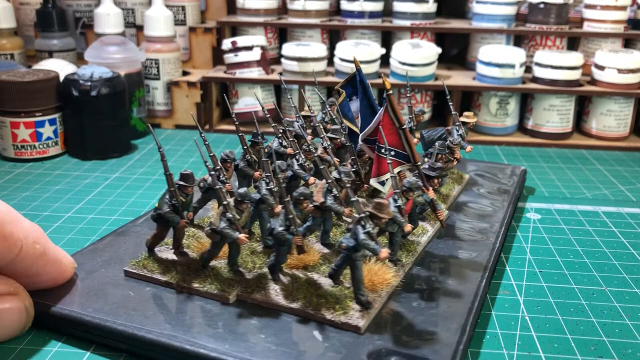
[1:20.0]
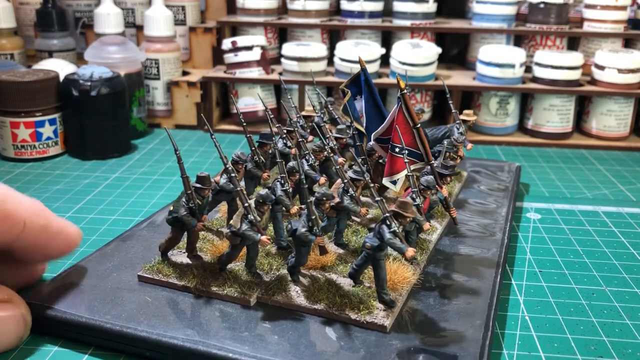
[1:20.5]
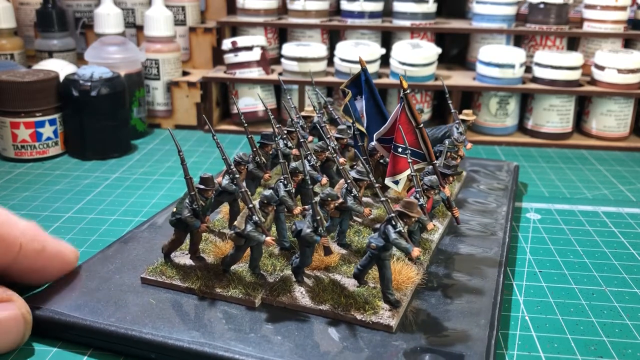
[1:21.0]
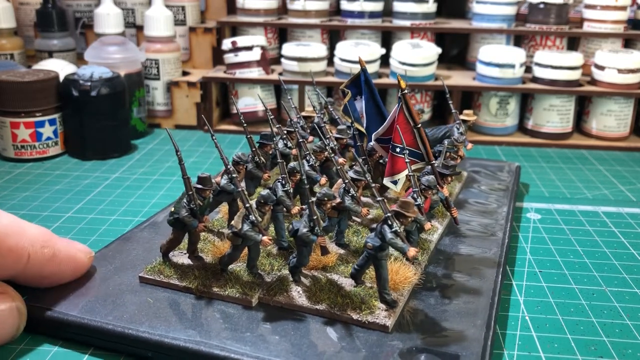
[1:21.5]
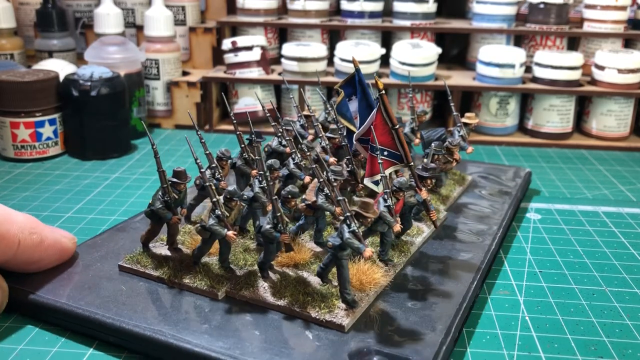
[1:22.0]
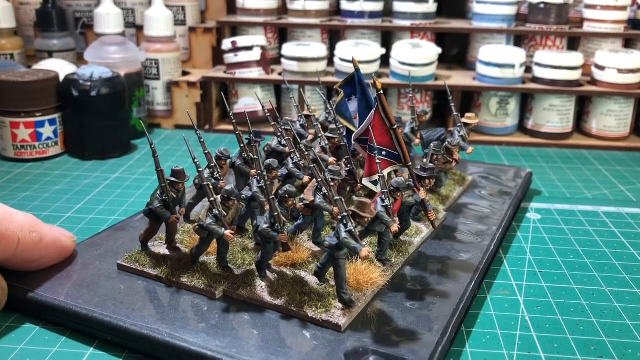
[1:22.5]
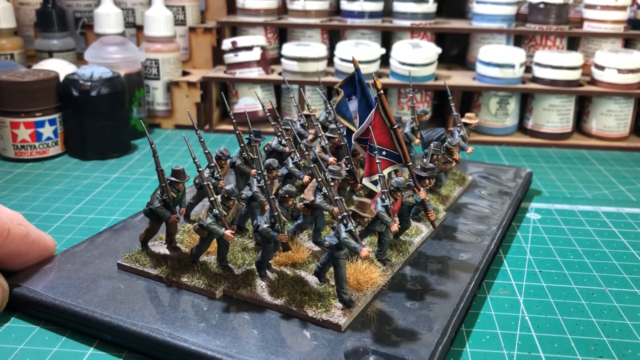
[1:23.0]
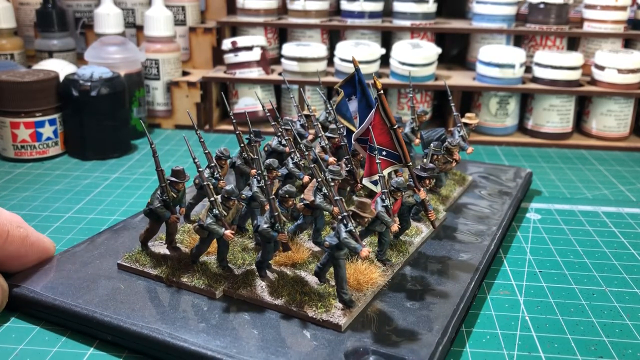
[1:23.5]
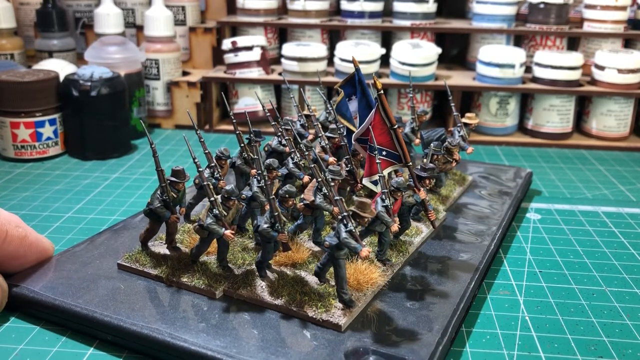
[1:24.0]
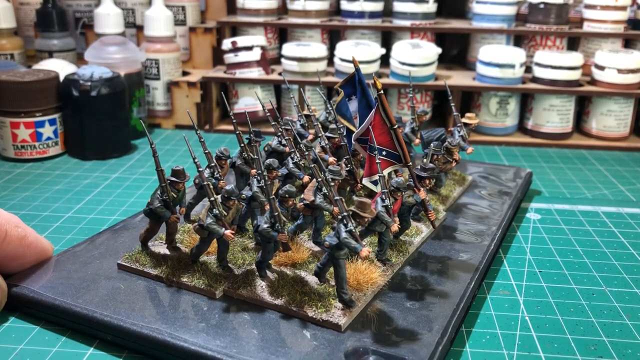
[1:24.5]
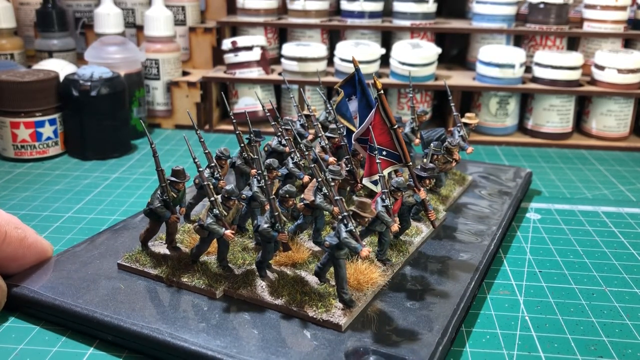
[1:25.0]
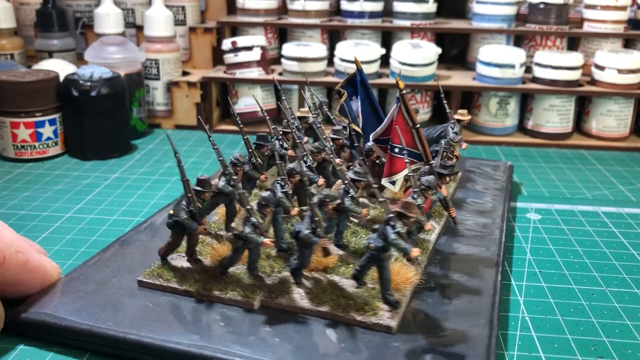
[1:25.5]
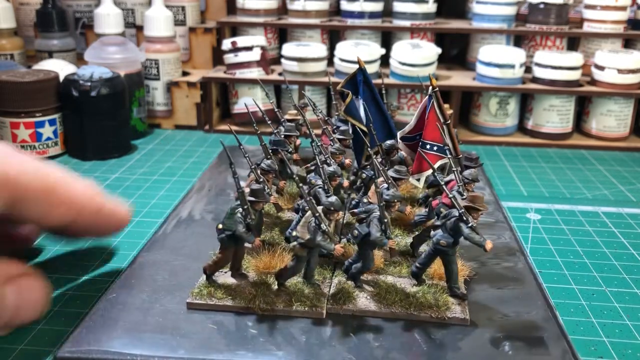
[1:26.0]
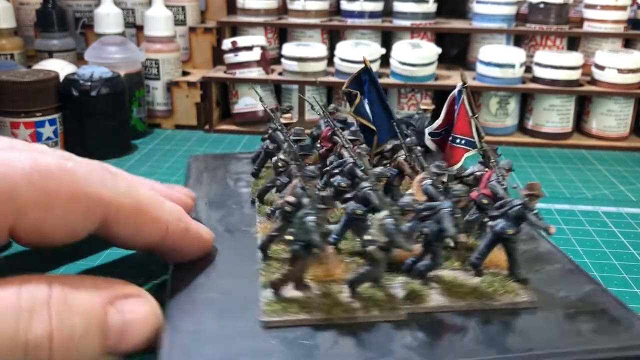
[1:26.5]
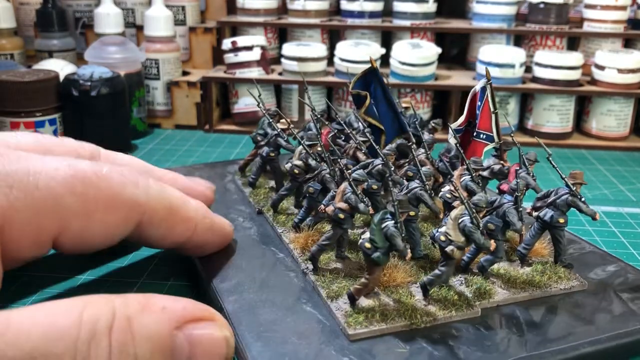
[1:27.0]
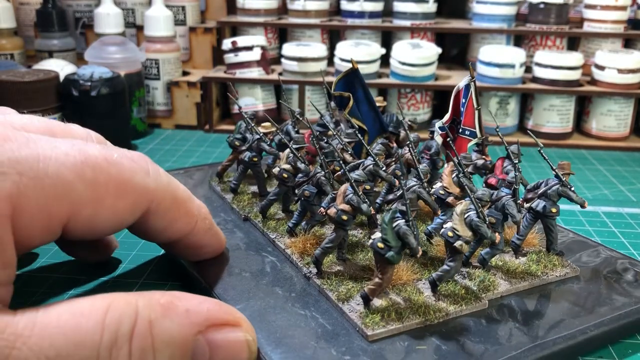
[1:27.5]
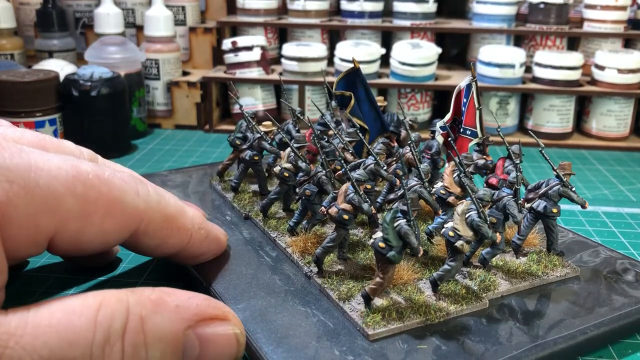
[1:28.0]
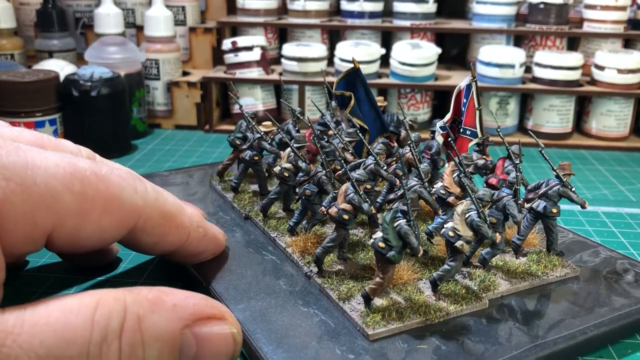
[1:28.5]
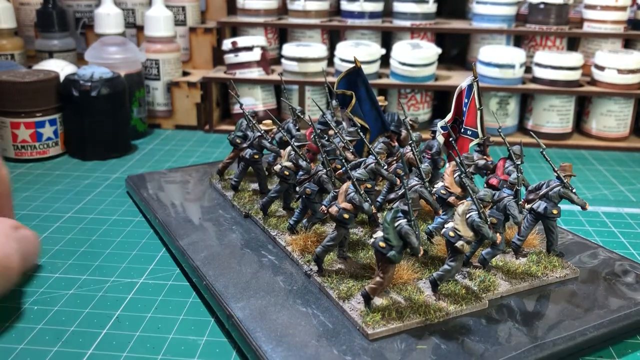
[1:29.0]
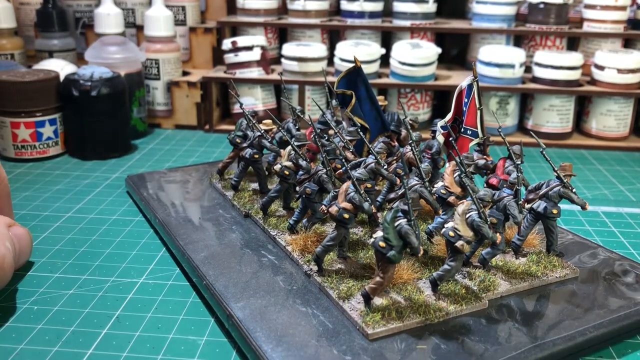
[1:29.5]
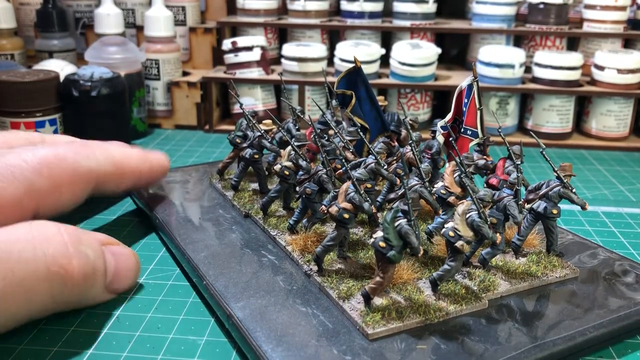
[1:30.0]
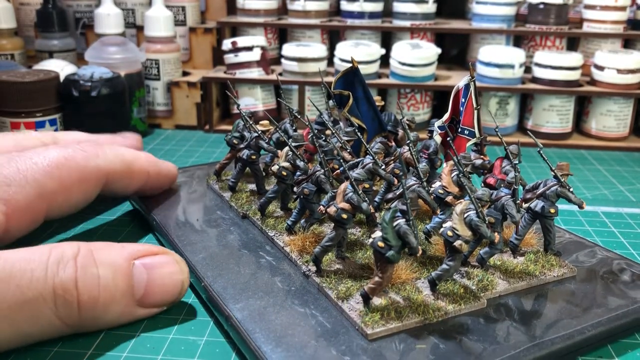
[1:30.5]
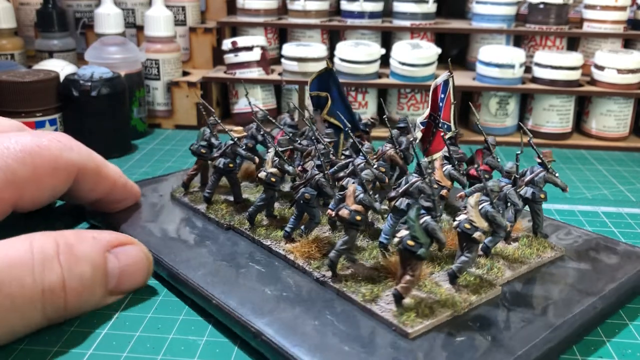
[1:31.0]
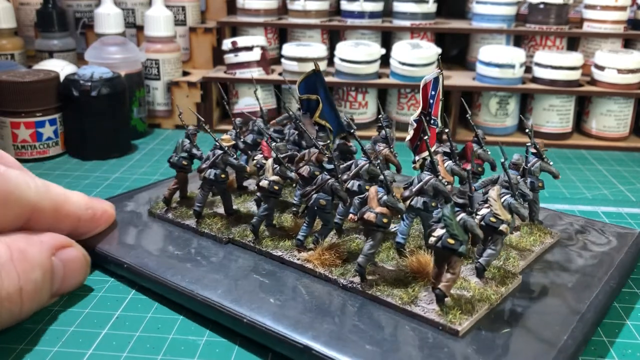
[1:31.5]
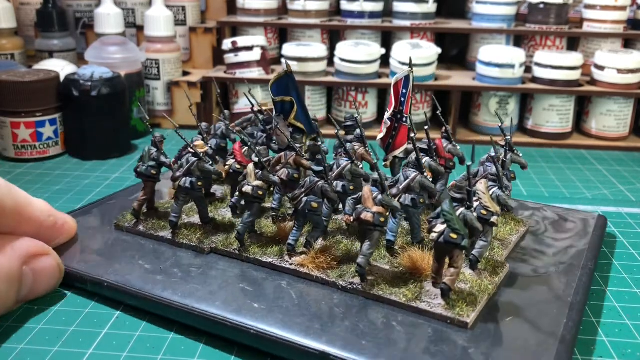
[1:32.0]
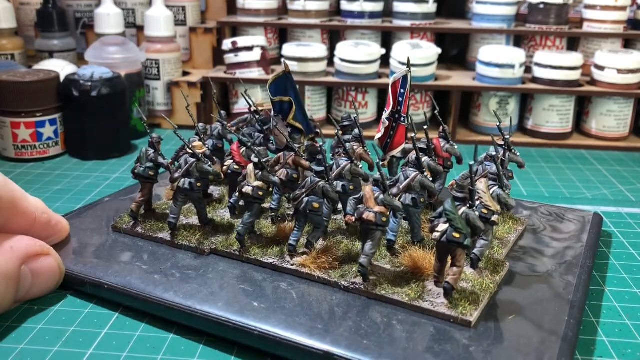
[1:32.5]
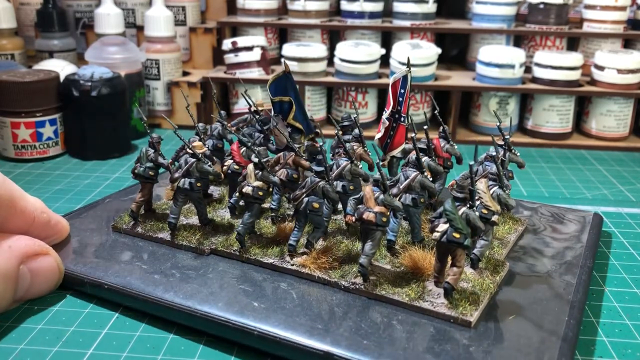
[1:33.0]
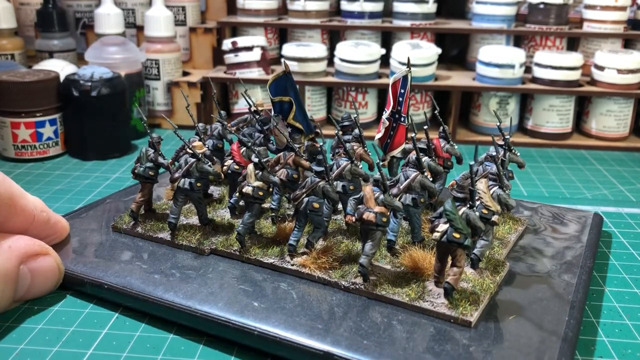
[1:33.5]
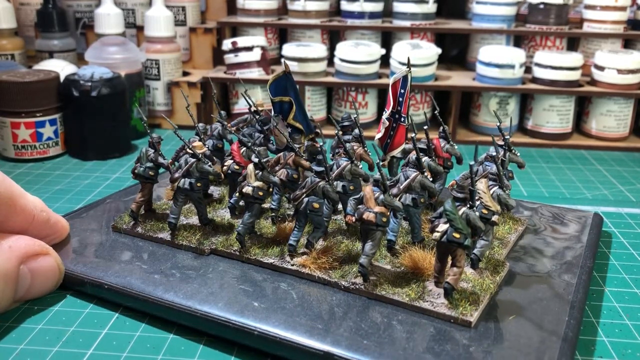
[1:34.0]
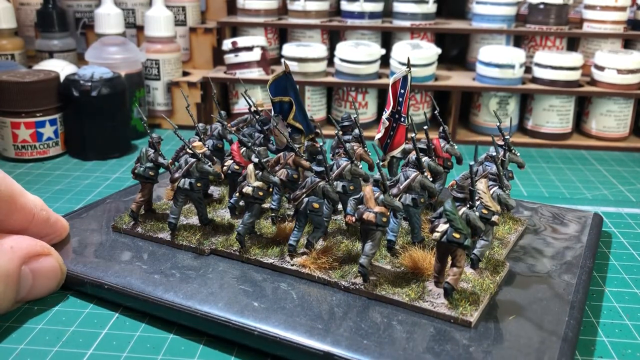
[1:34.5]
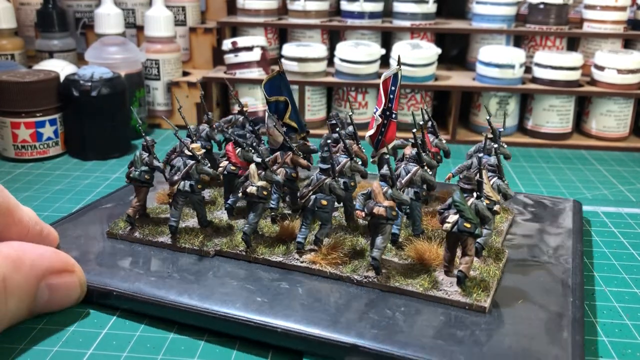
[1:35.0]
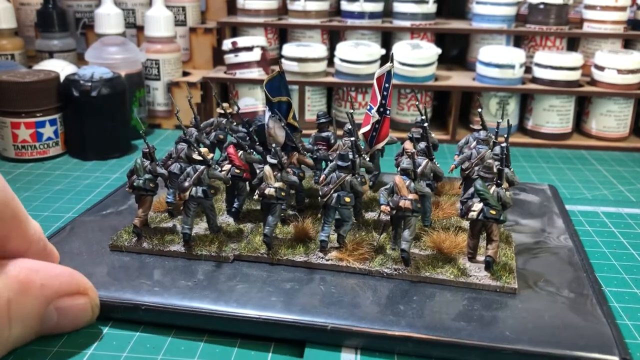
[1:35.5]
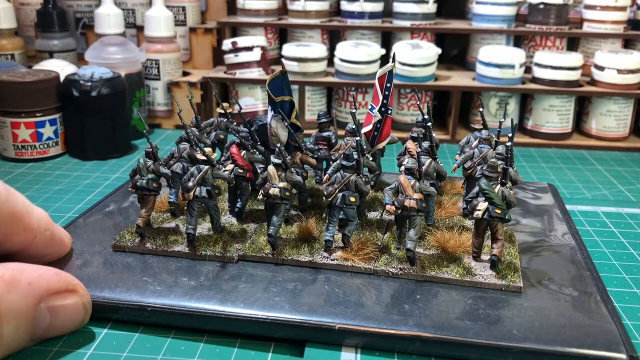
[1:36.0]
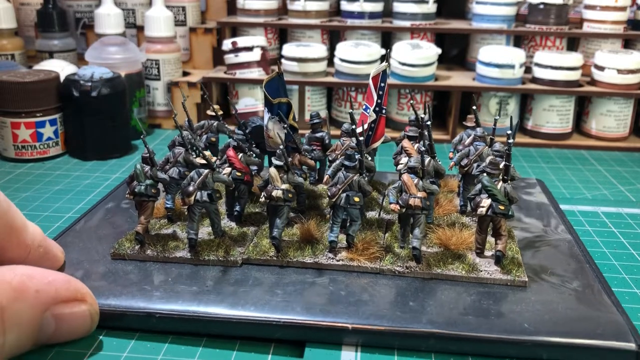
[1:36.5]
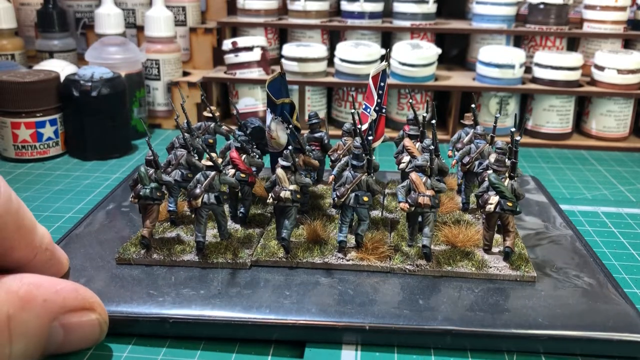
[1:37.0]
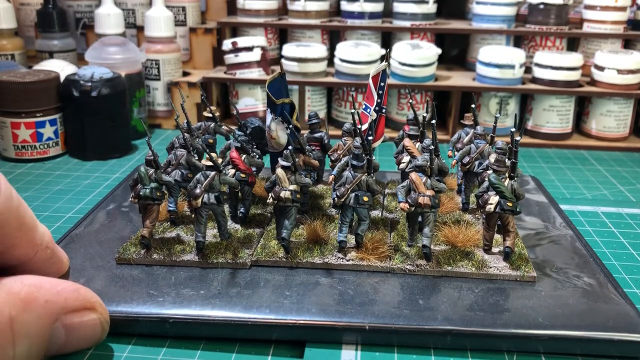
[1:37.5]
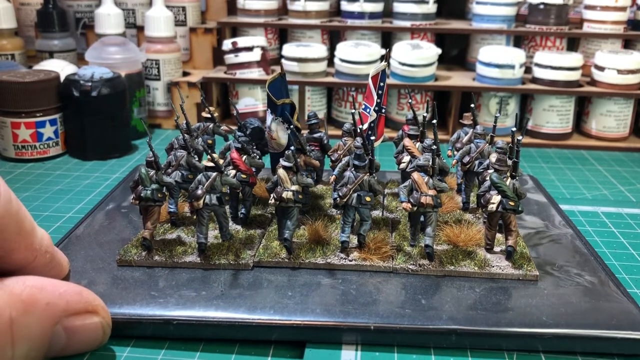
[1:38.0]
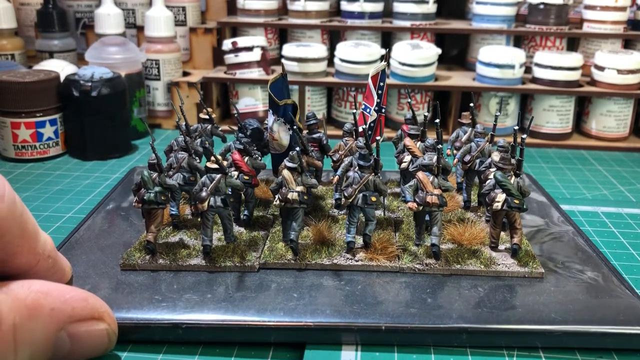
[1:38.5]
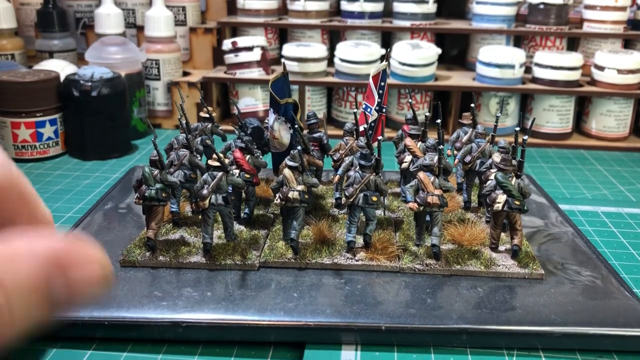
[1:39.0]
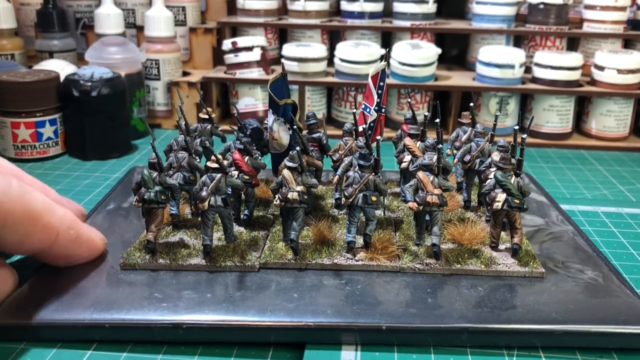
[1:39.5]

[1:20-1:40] The hand is more featured as the person turns the figures left and right so that the viewer can see behind them. There are a number of figures, which appear war-related and appear to be individuals going into a war.